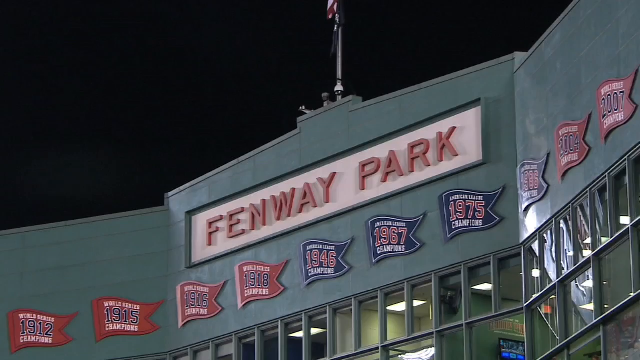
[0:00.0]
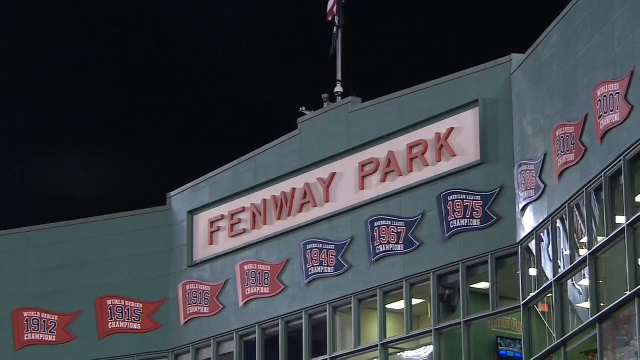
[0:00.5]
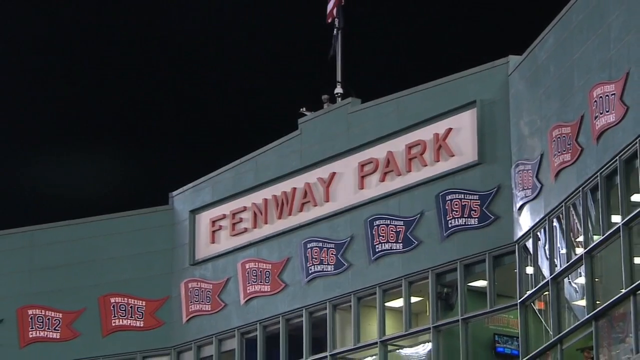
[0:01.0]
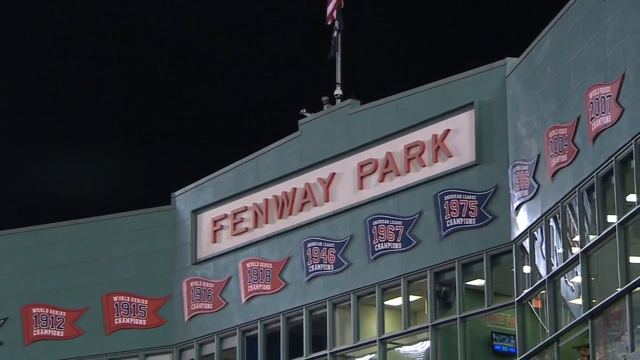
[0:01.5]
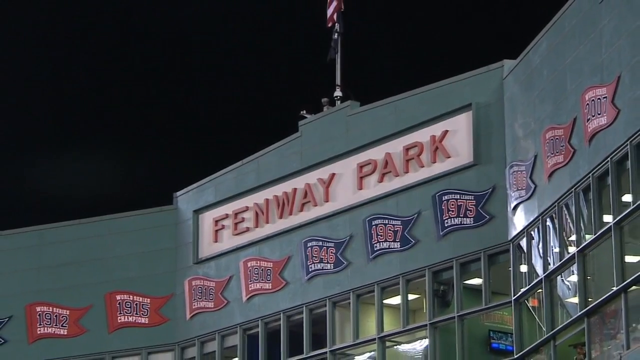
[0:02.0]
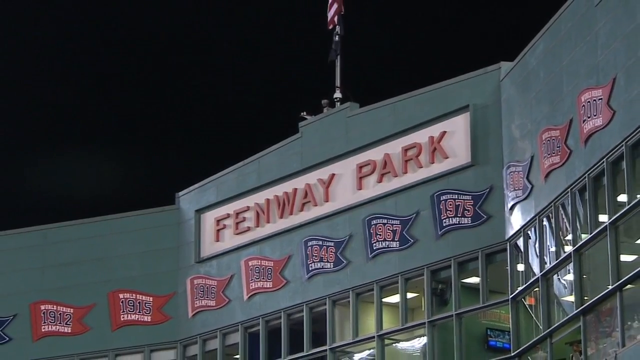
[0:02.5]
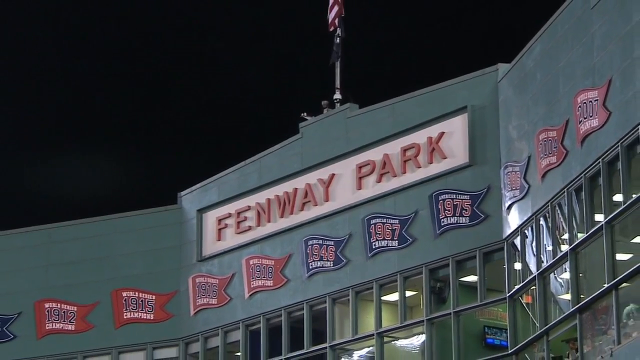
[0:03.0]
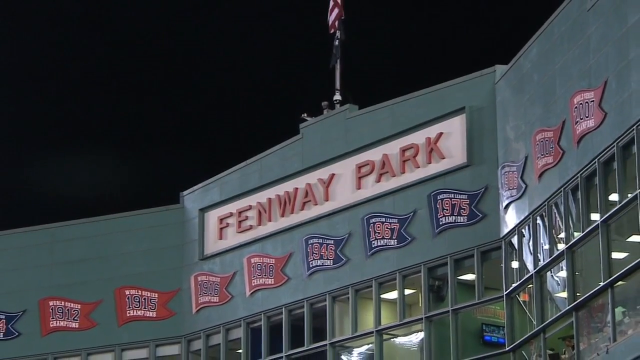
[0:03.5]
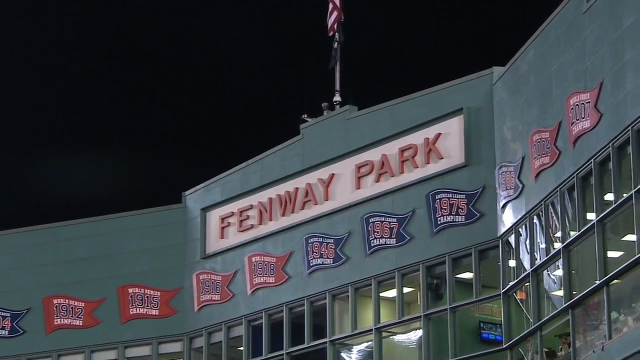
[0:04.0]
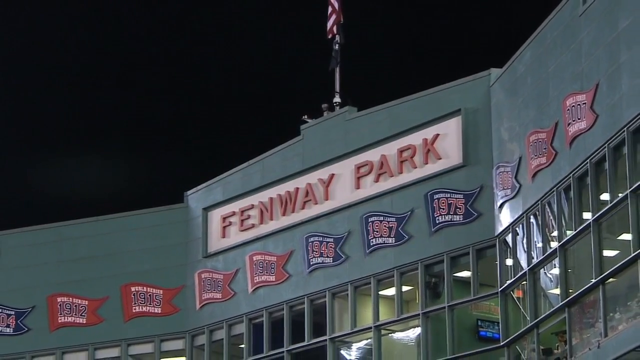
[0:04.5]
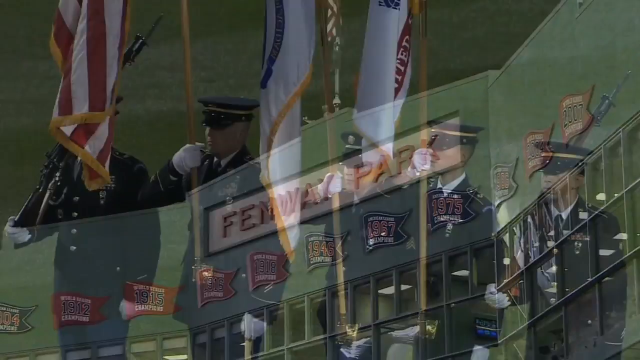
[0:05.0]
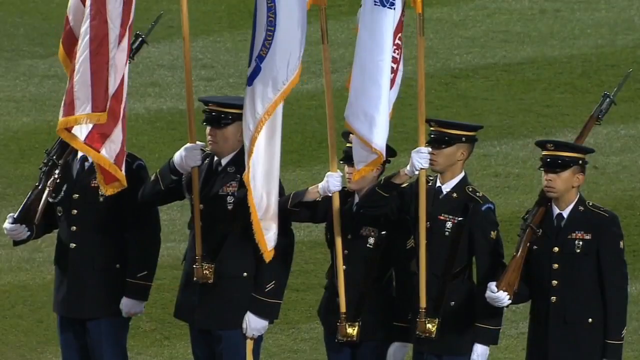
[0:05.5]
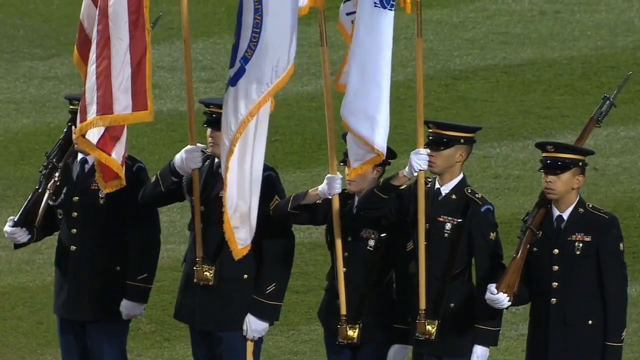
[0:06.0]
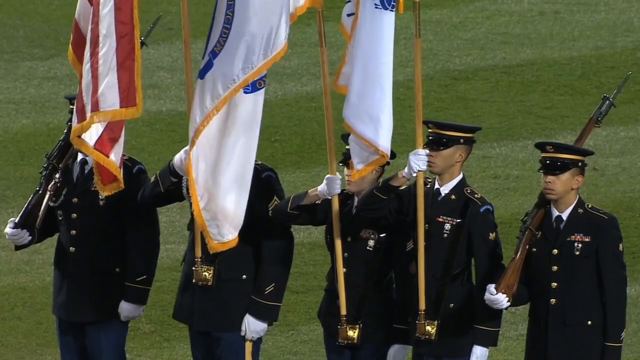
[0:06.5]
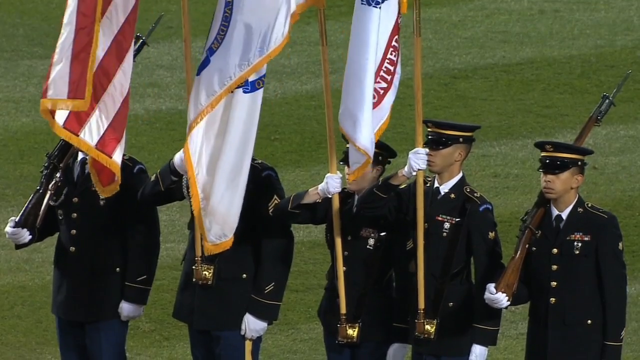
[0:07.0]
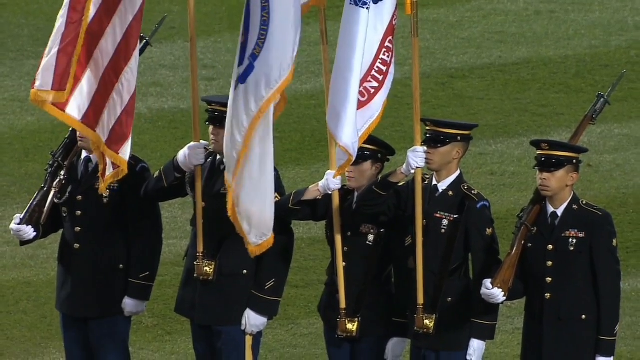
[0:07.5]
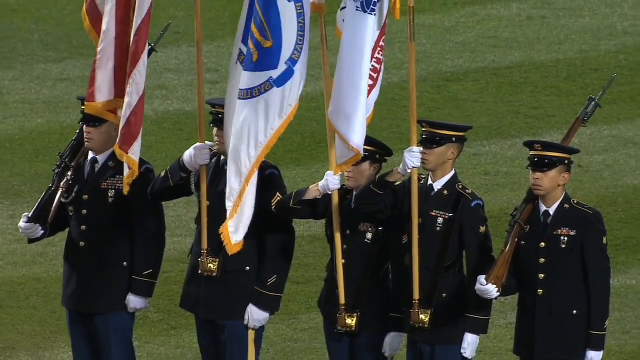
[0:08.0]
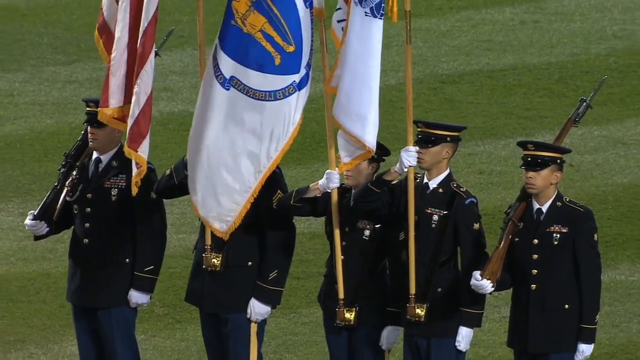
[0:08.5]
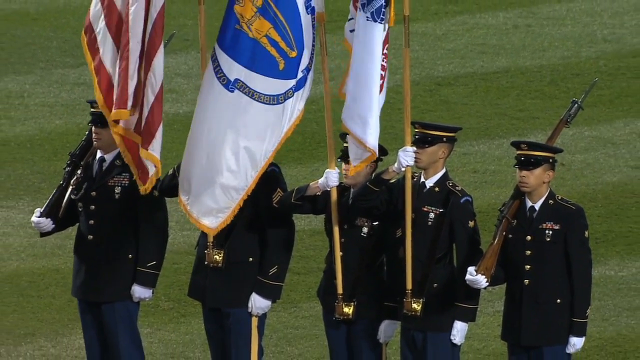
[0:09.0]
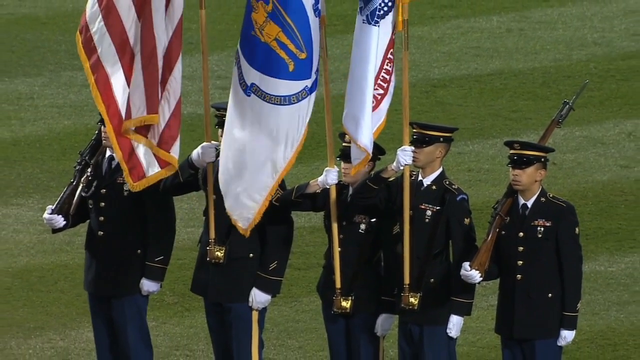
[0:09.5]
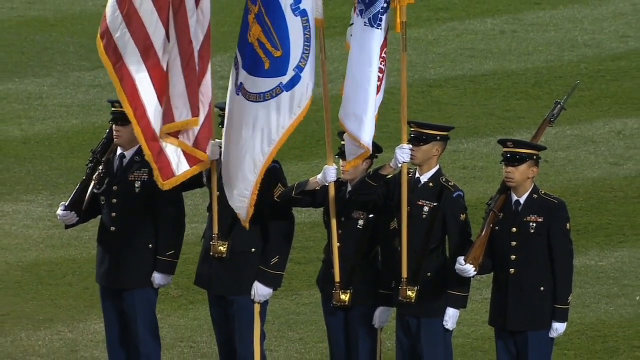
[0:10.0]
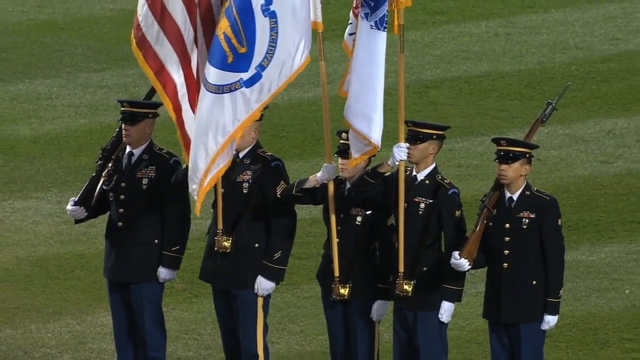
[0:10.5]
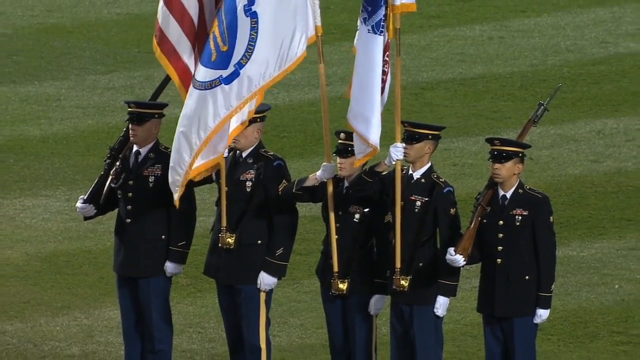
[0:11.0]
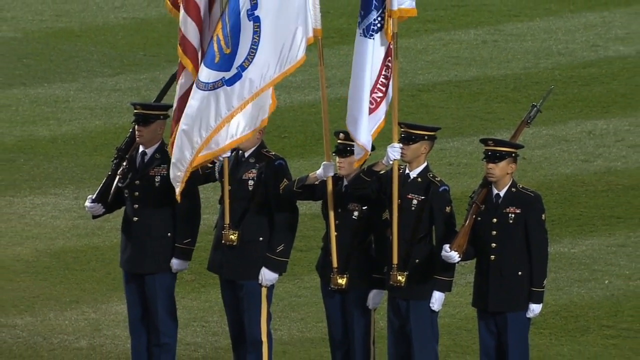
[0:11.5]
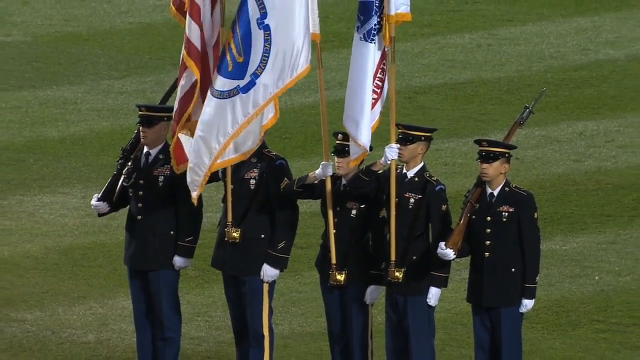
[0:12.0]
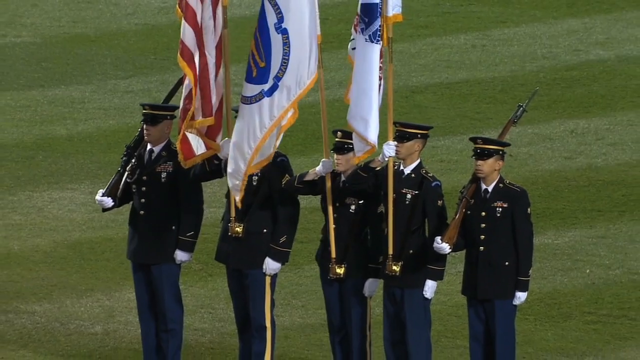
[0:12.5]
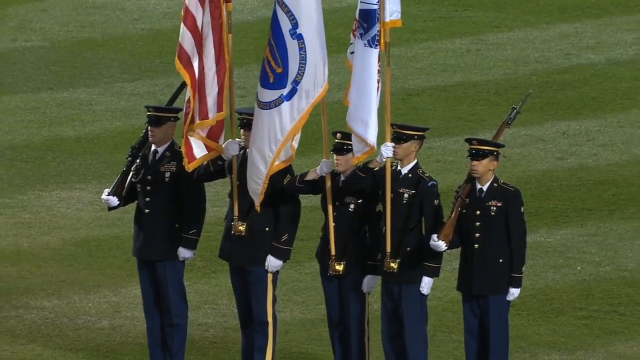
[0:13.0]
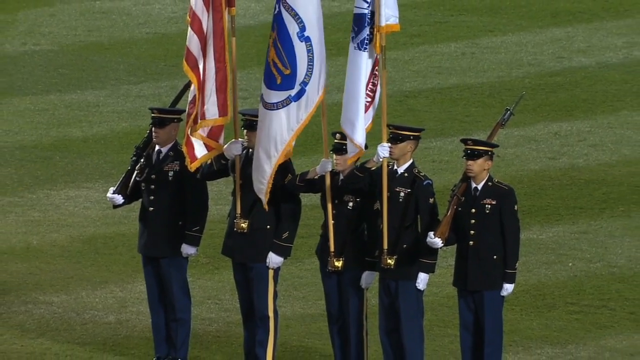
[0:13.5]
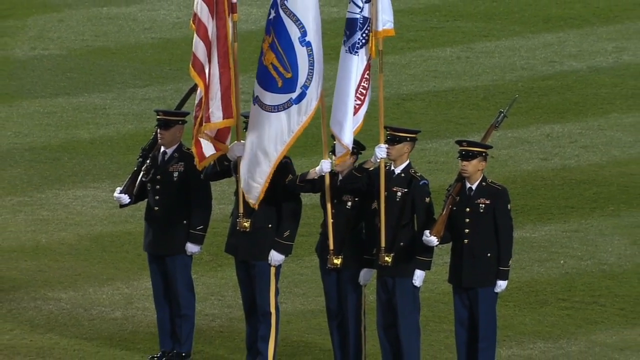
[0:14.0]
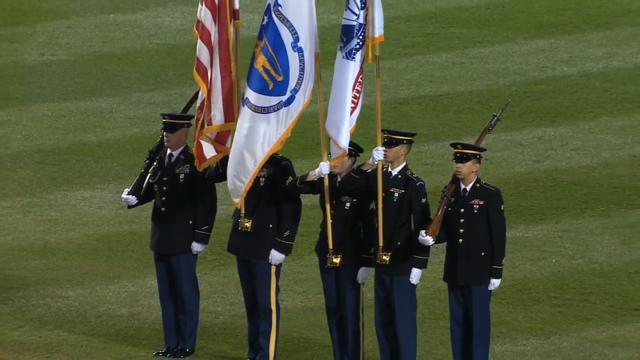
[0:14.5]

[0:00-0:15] The setting is Fenway Park. Five members of the National Guard or Color Guard stand holding three flags, with their guns. Fenway Park has a few small flags. There are two different shots: one of the five guard members holding the flags and their guns, and then an image of Fenway Park, showing the sign that says "Fenway Park". The lettering appears to be red, with white around it in a rectangle and dark blue at the top. The flag is swaying. What appear to be awards and dates are visible on the Fenway Park sign inside the stadium. The grass is very well mowed, with stripes in two different shades of green from the mowing. The camera starts zoomed in and then zooms out.